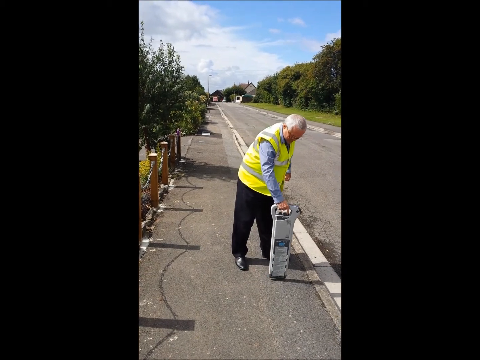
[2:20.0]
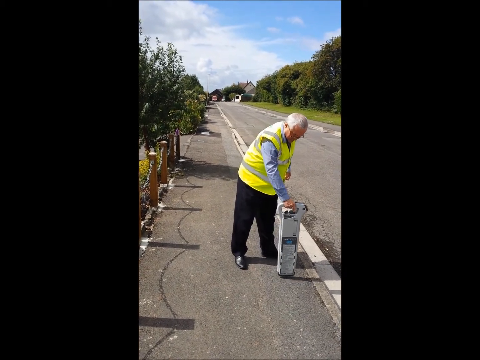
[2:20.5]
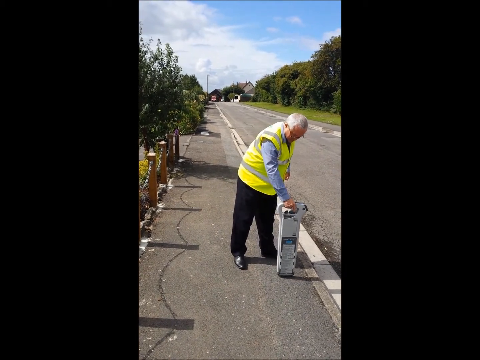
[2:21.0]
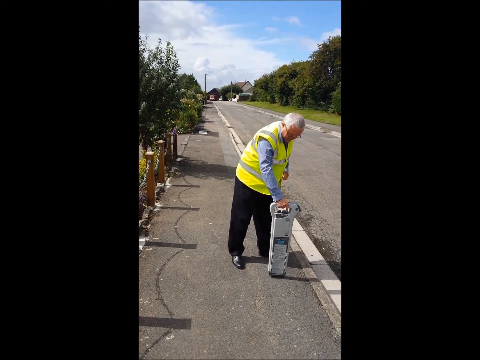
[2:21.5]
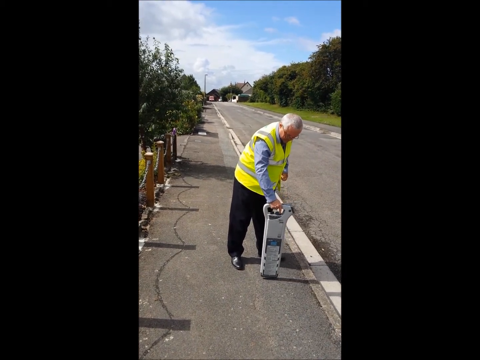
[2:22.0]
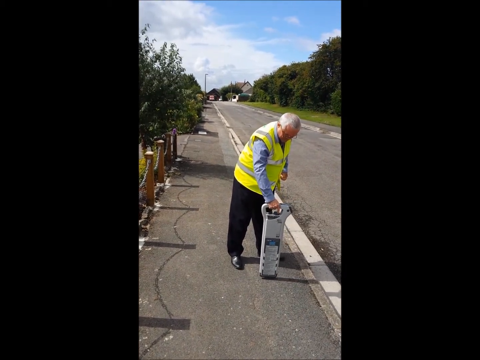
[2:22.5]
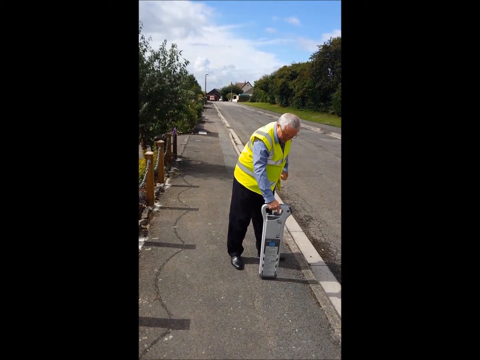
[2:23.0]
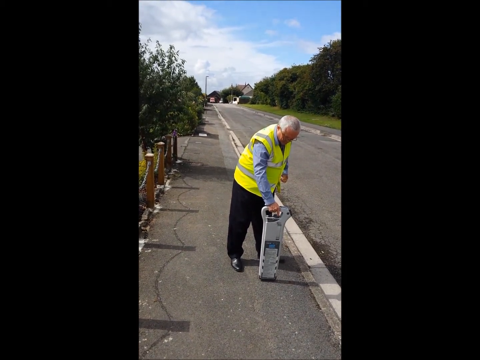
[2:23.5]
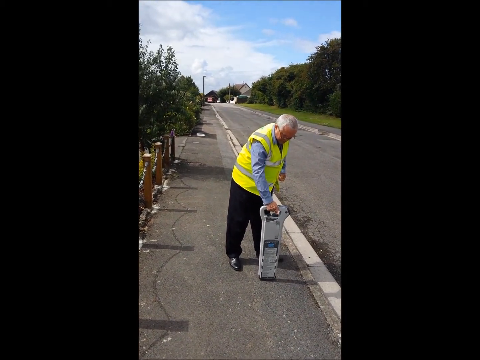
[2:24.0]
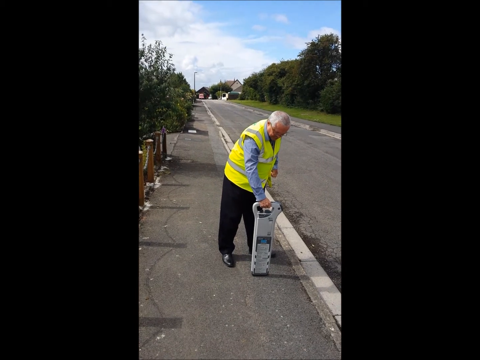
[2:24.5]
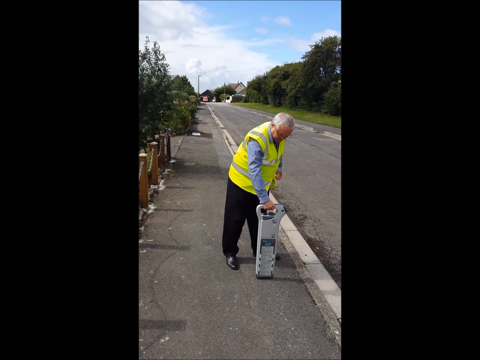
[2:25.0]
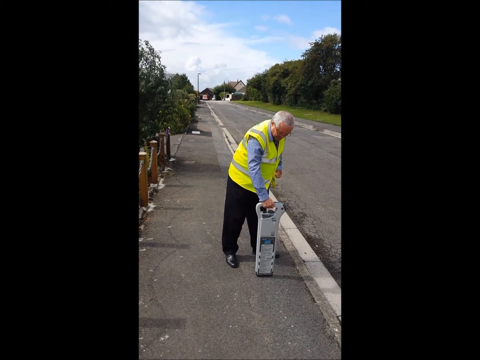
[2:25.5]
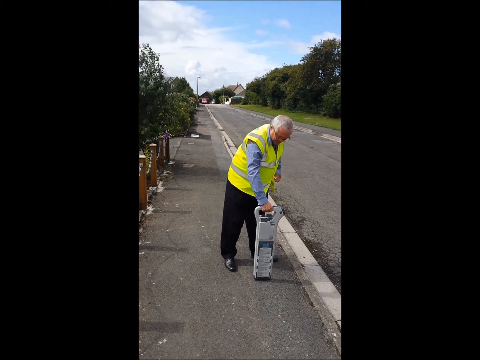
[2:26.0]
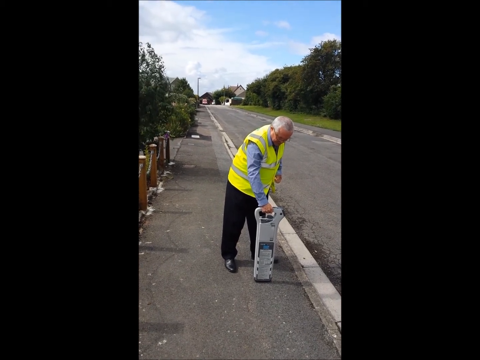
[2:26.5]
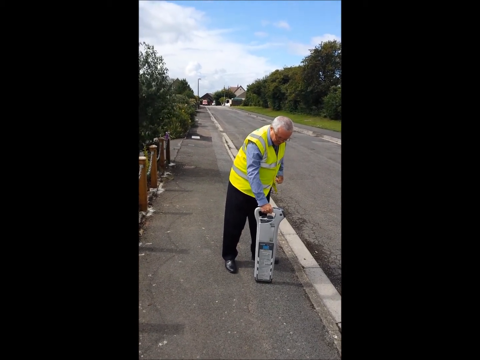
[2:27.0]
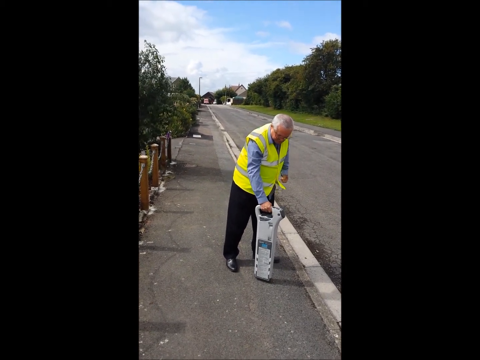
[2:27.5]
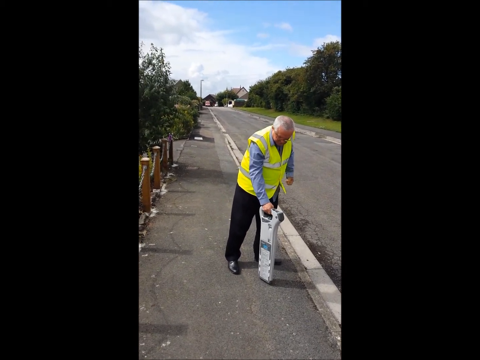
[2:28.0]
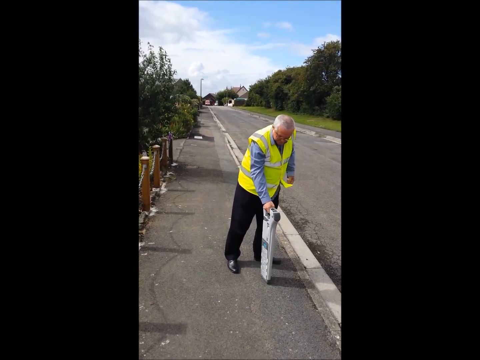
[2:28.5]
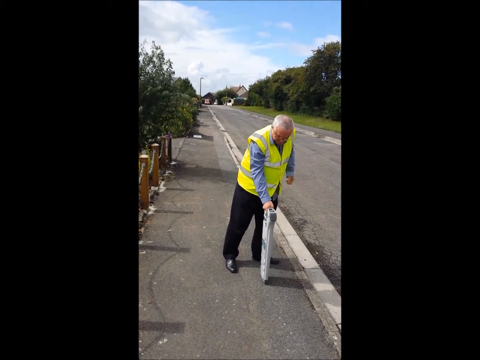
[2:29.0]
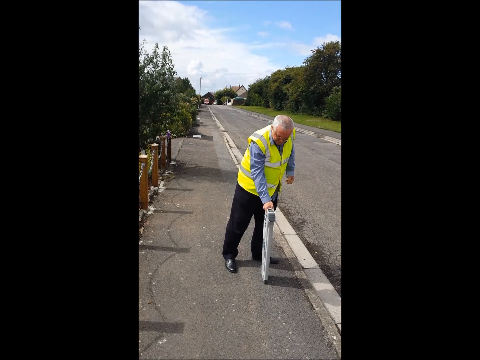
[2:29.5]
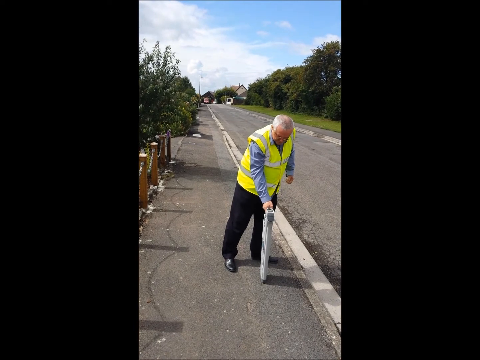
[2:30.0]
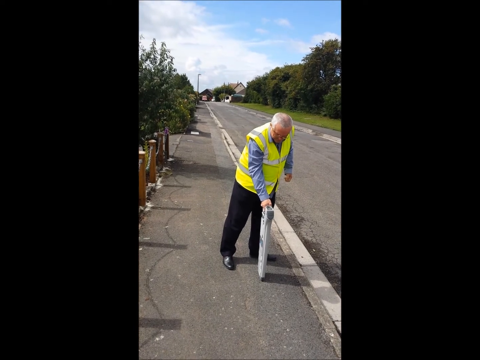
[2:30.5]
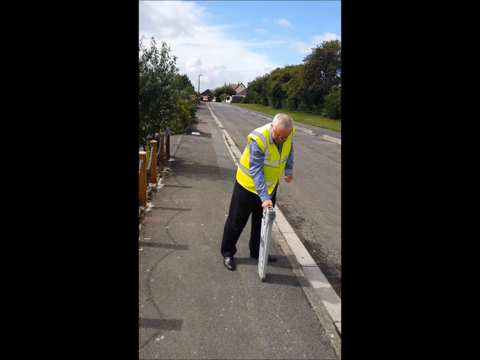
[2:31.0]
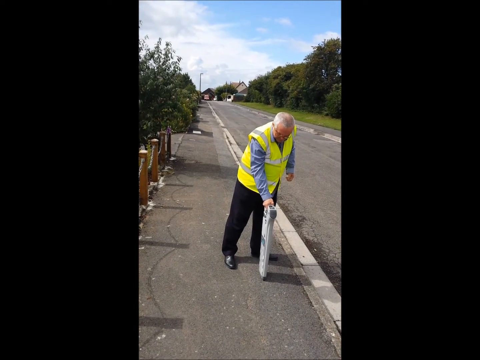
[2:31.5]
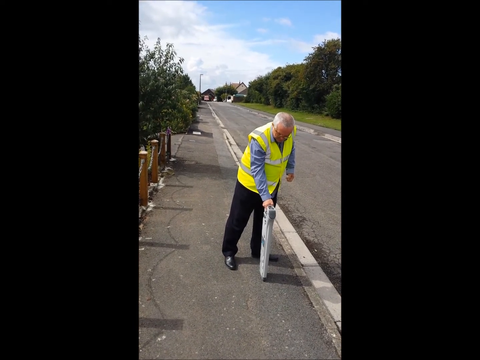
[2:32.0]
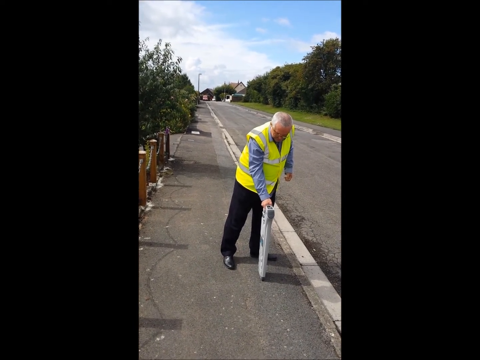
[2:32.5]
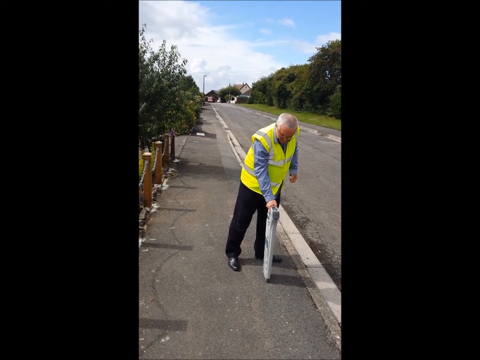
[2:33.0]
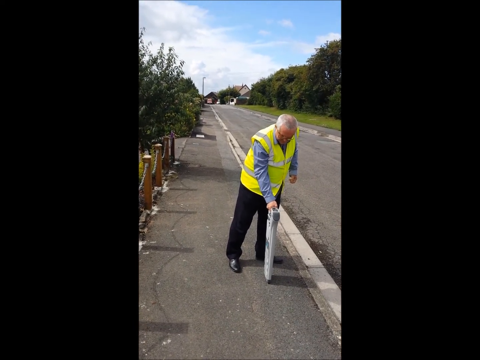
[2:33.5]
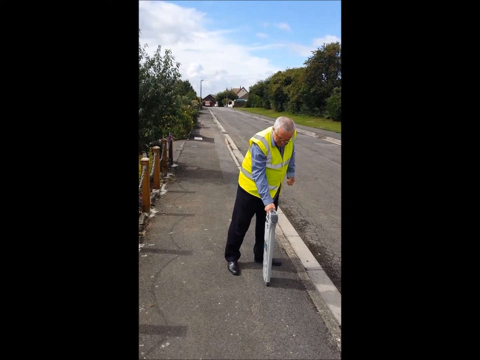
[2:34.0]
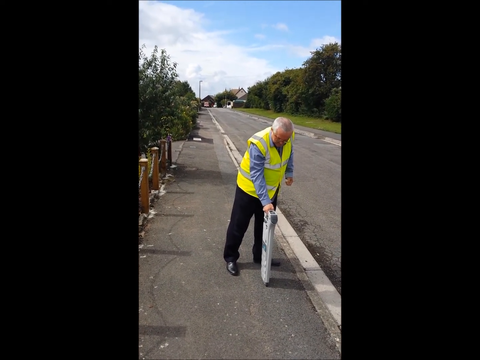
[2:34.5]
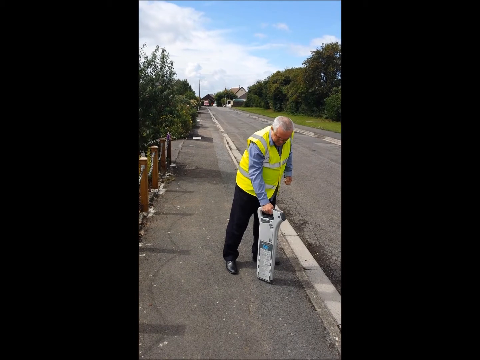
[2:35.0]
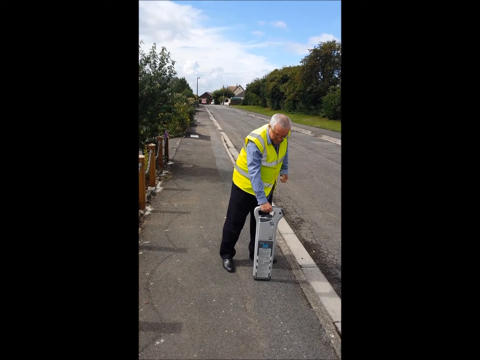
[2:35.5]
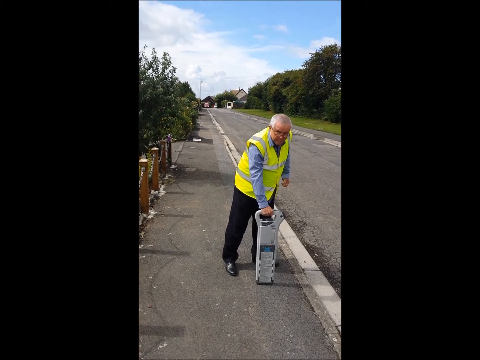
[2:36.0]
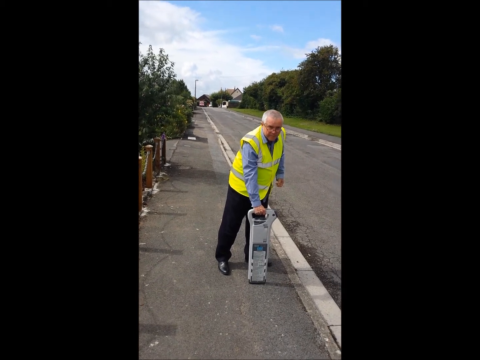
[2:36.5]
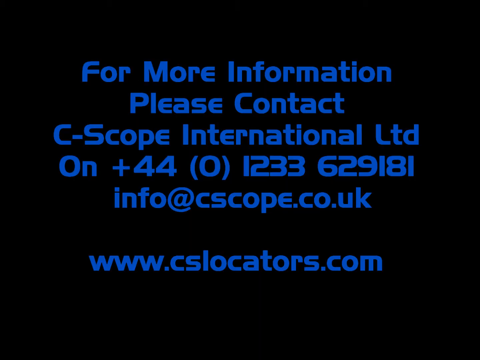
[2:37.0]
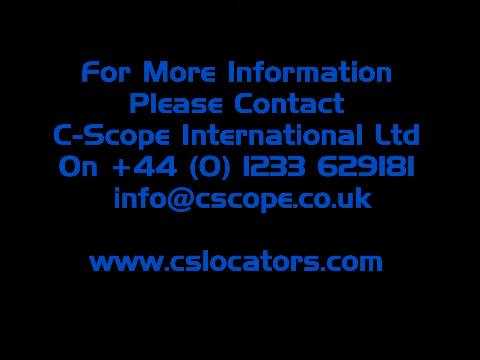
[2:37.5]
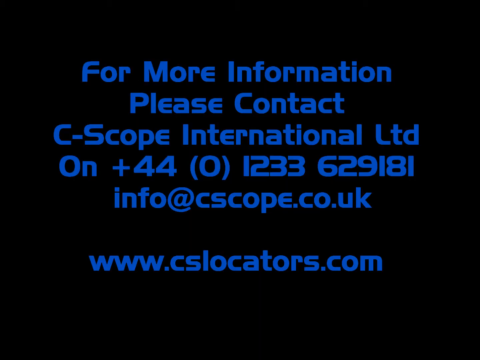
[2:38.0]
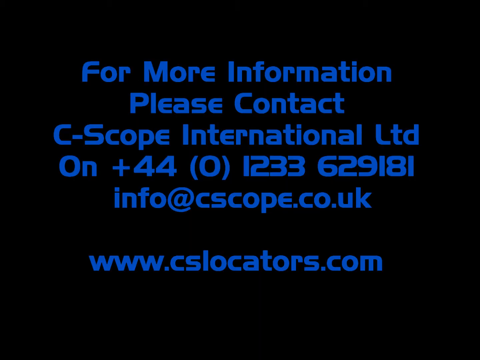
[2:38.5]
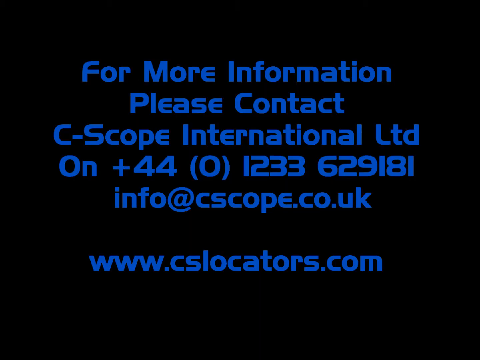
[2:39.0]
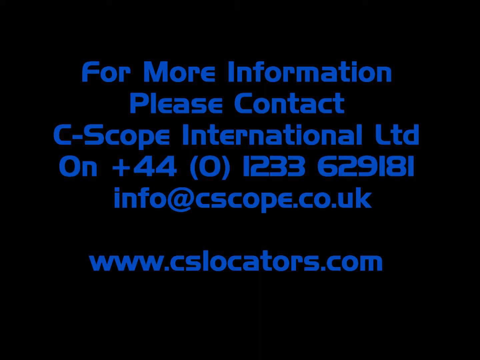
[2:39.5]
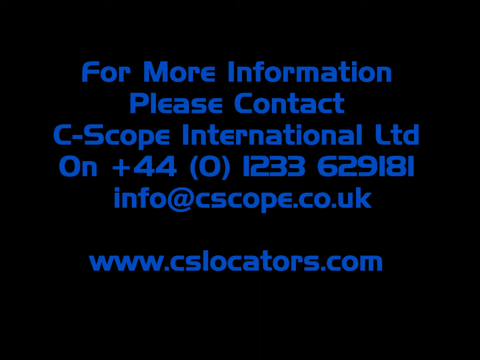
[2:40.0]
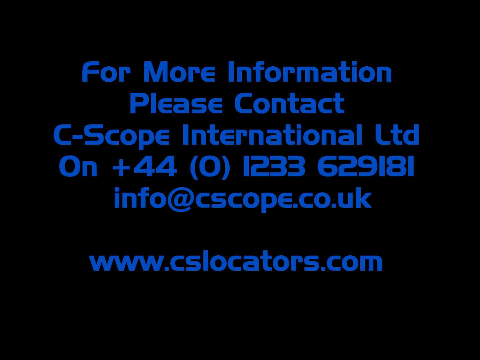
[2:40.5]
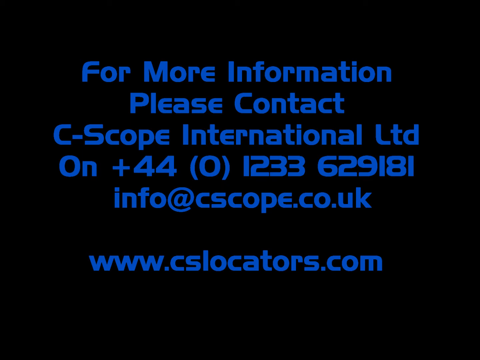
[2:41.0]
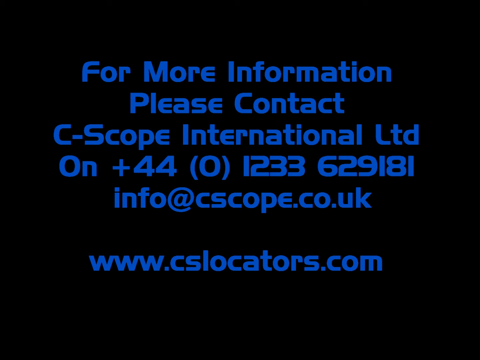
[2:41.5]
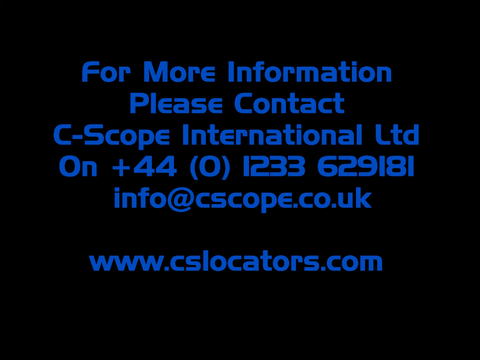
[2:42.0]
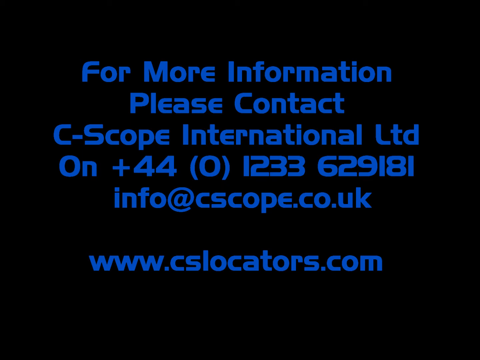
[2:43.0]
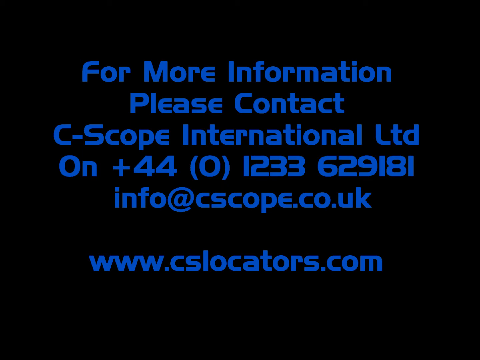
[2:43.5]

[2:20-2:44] A man uses a device called the C-scope to detect power mode, holding it and turning it slowly while it touches the ground; it reaches almost to his upper thigh area. He is an elderly man with gray hair mixed with a little white, and he wears glasses. The video then cuts to a black background with royal blue text reading "for more information, please contact C-scope International LTD on +44 (0)1233629181." Underneath it says "info at cscope.co.uk," and after a space, "www.cslocators.com."